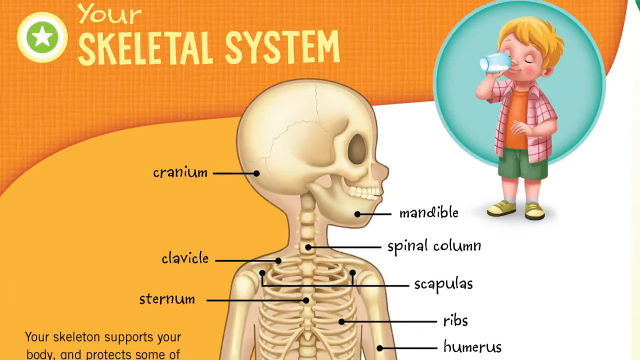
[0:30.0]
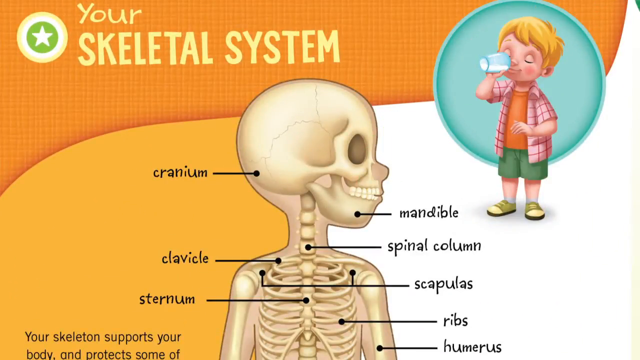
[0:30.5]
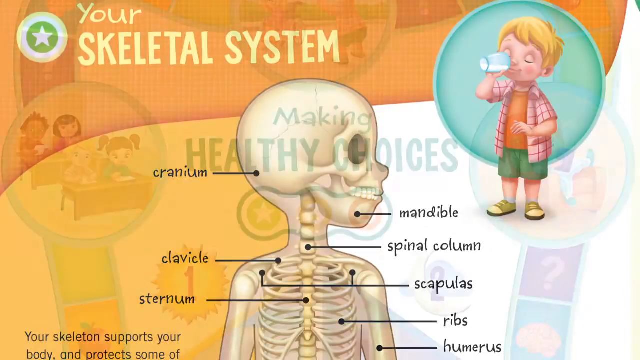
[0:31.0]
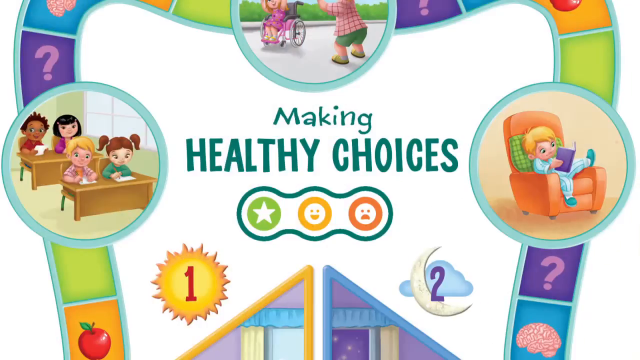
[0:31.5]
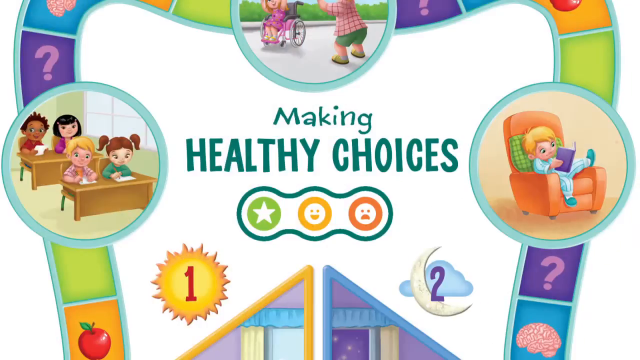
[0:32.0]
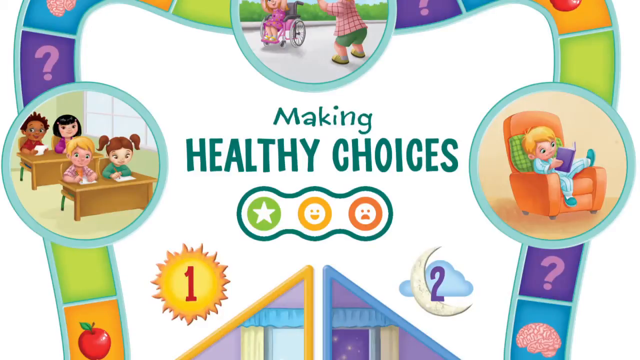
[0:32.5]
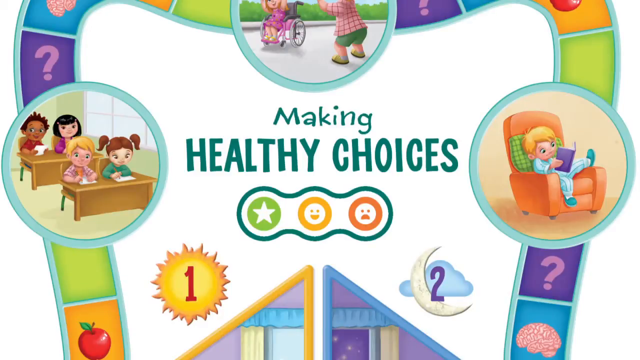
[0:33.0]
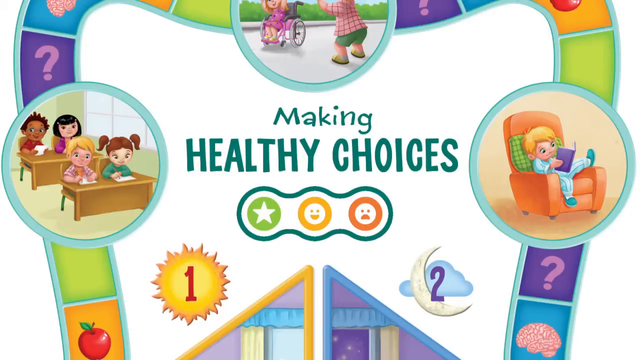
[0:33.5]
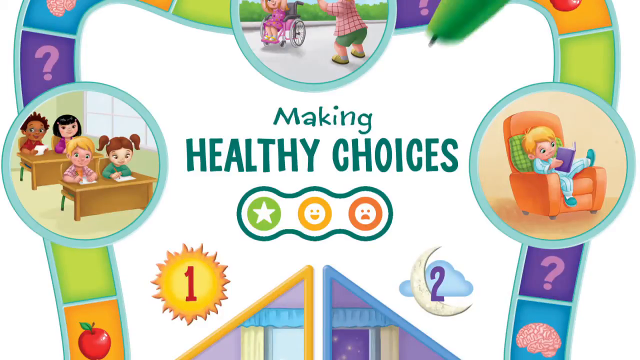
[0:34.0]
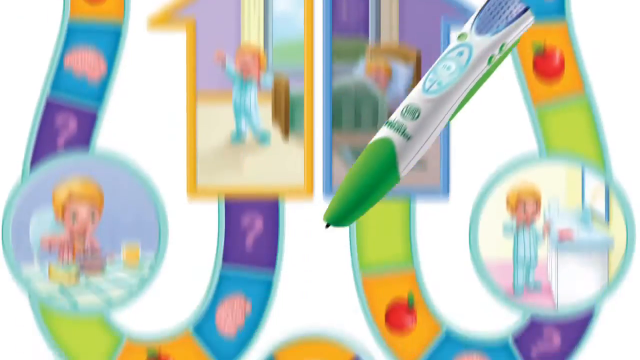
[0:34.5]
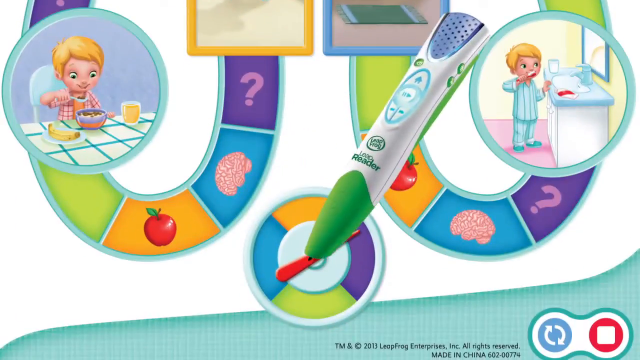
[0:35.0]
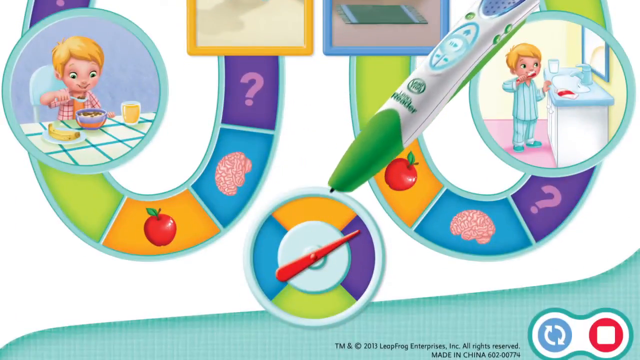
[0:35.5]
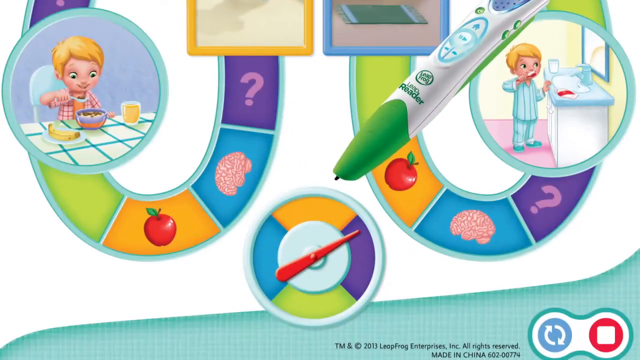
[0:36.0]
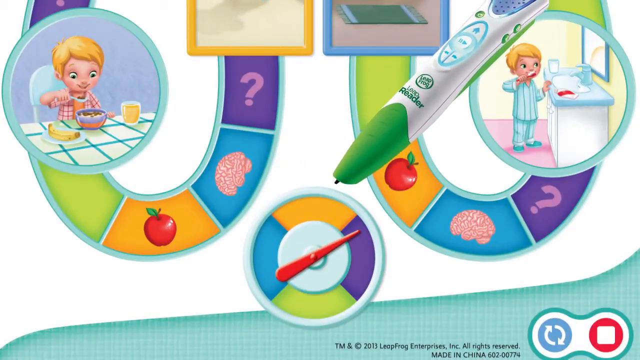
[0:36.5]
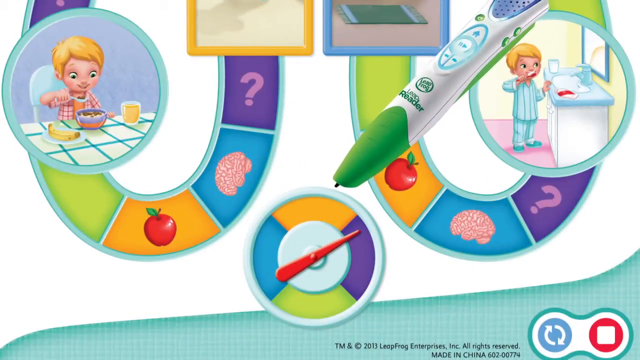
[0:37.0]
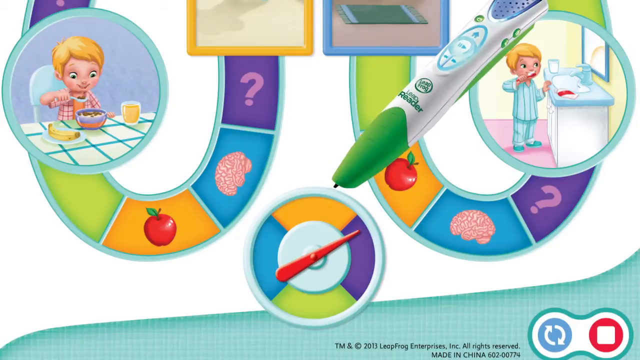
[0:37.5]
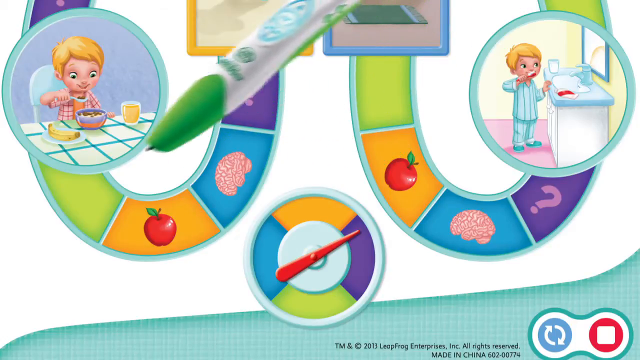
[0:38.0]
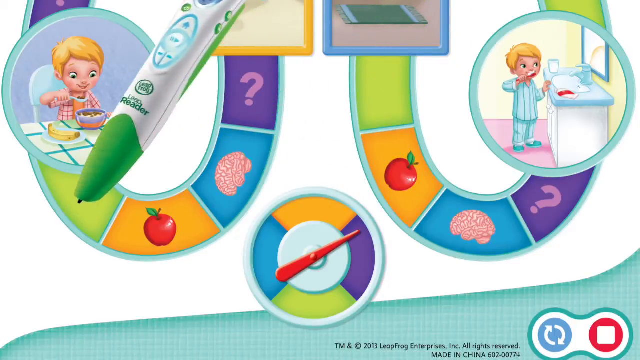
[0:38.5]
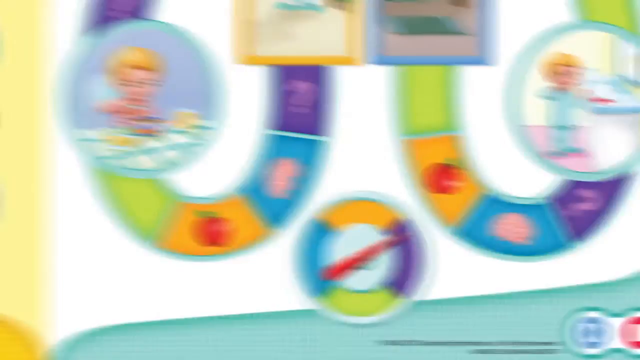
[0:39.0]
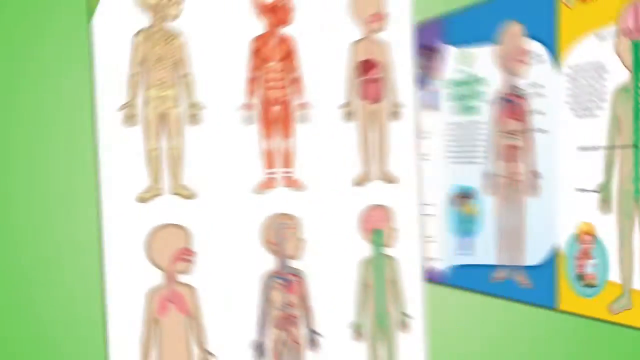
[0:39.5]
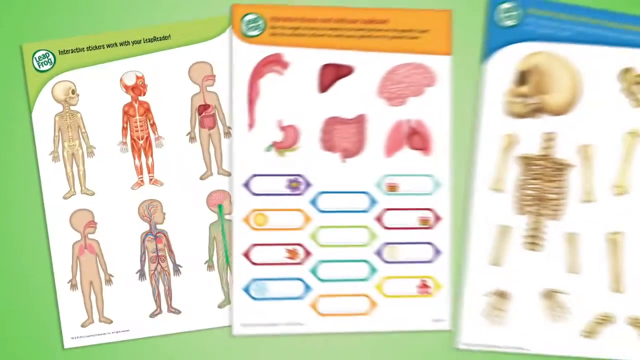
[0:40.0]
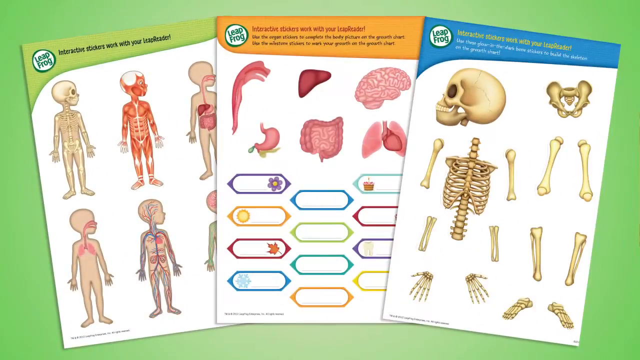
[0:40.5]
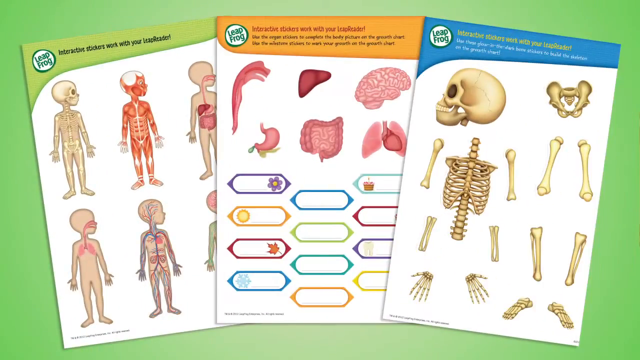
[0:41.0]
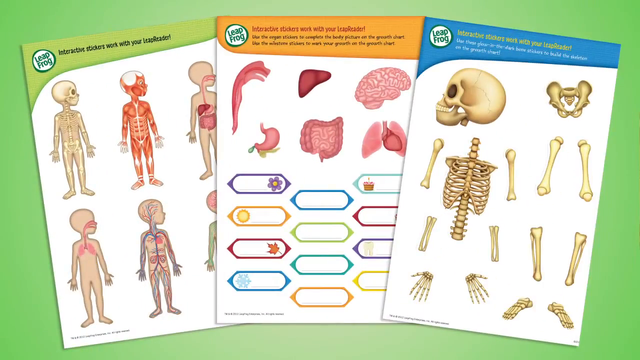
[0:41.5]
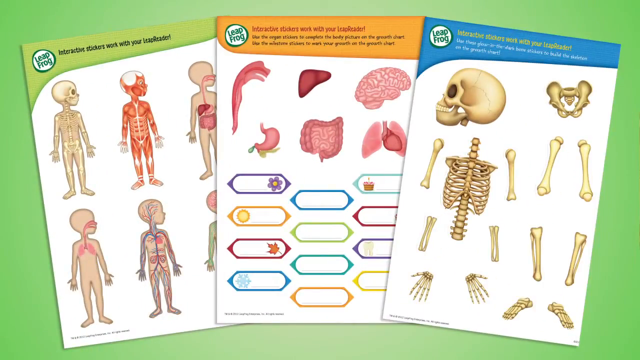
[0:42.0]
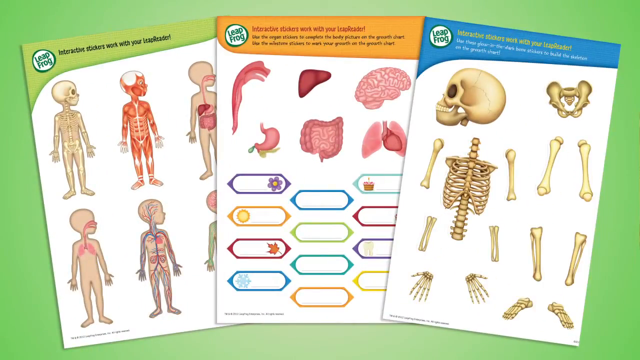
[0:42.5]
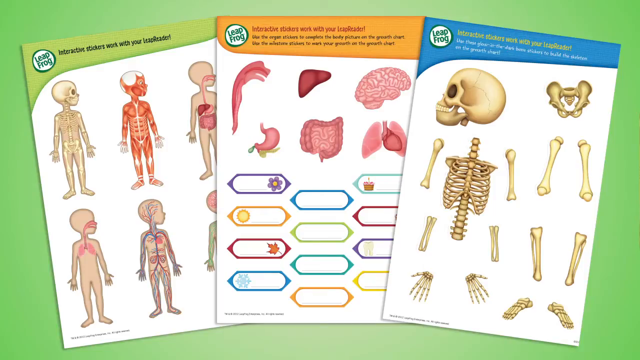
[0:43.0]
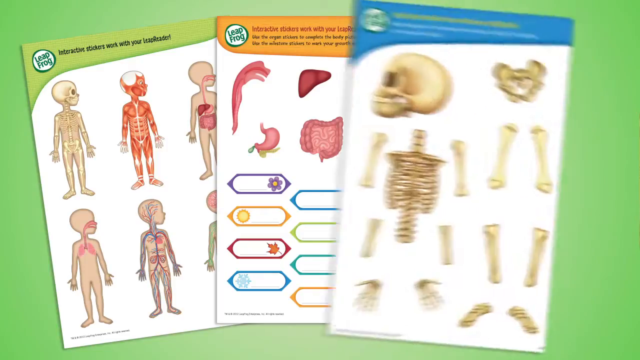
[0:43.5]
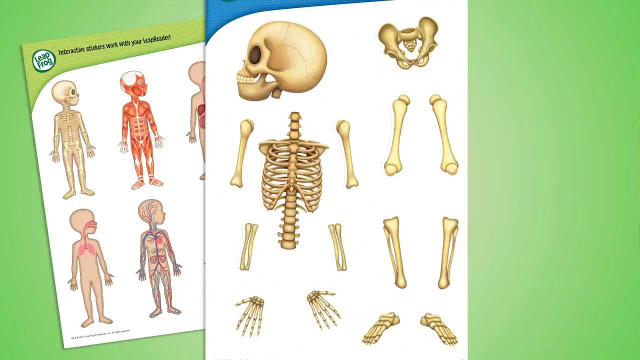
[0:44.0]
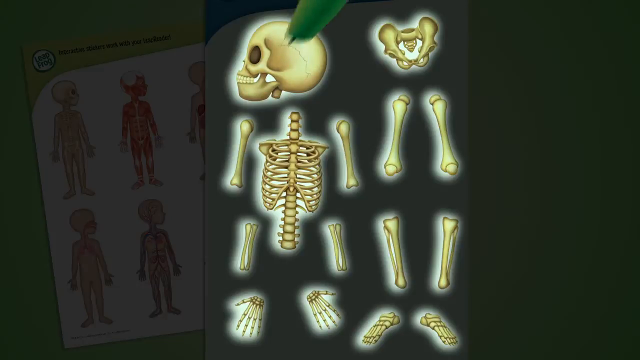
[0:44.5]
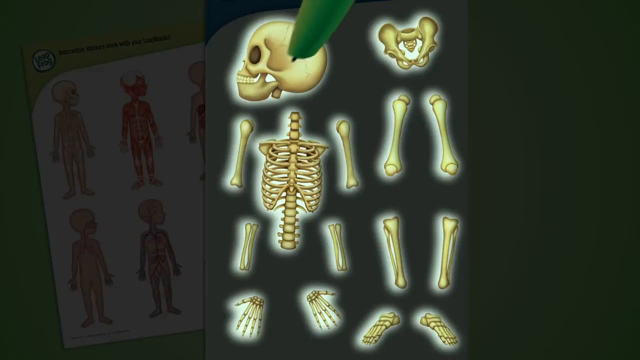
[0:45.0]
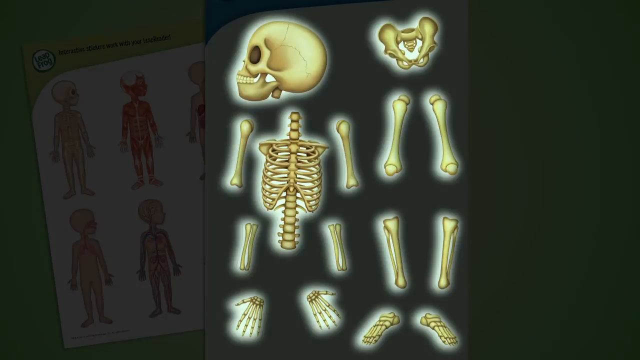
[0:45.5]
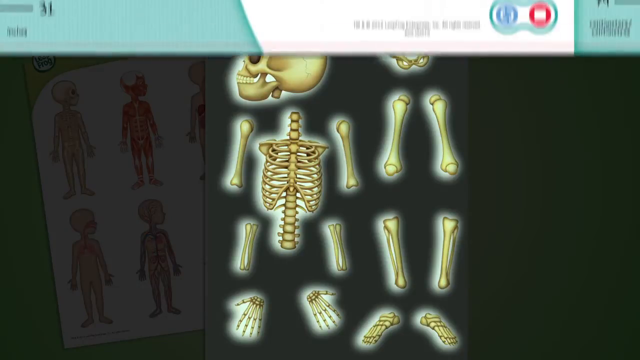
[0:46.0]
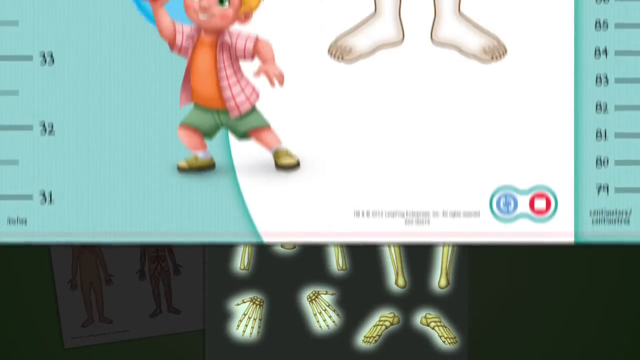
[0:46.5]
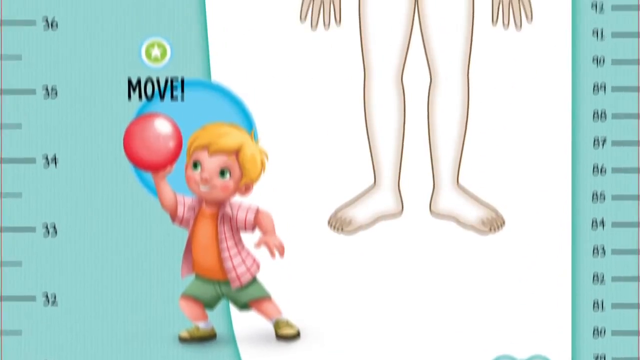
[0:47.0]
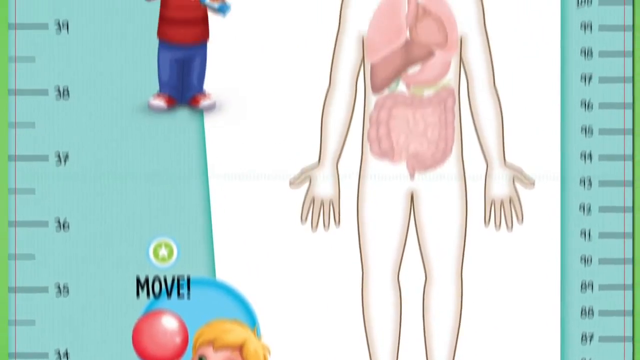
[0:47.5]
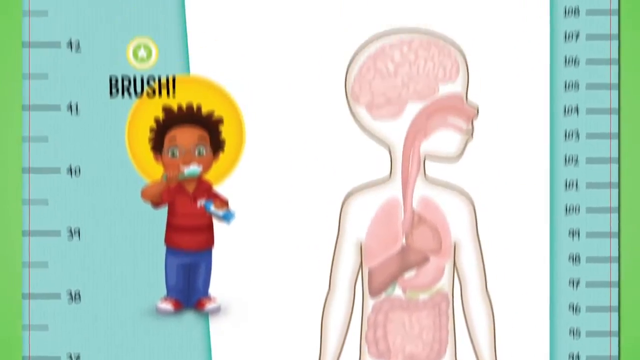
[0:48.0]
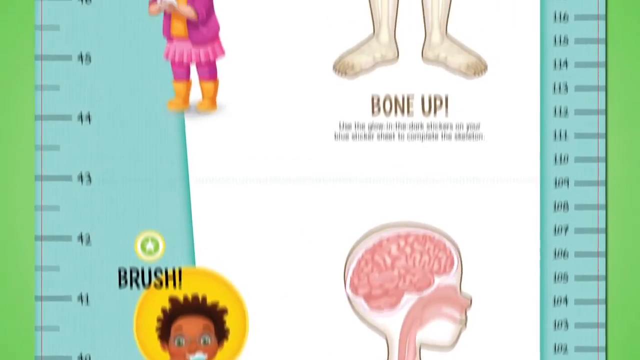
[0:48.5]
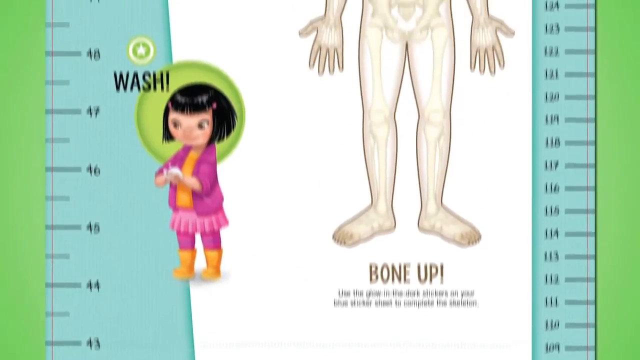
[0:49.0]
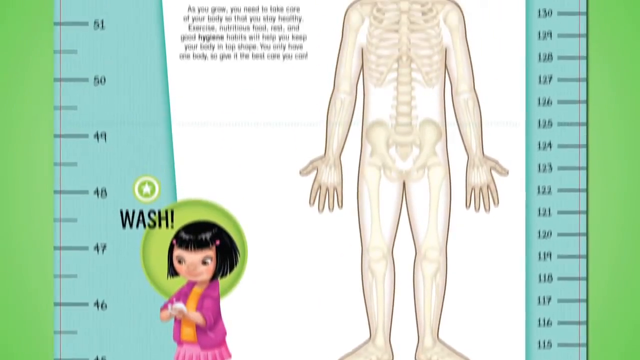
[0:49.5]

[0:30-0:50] A page has a yellow background. In the left corner "skeletal system" is written, with a star in a green circle. In the top right corner a boy is drinking something that looks like coke from a glass, with a light-colored circle behind him. He wears an orange t-shirt, an unbuttoned jacket shirt, green shorts and green shoes. On the bottom right is a big white round. In the center is a skeleton of a human being with pointers to different parts: on the left, the cranium and clavicle; on the right, the mandible, spine, pelvis and rib. The video then shows another page about making healthy choices. On the left, children are sitting in a classroom. At the top are two kids, one sitting in a wheelchair and the other standing. On the right, a boy is reading a book while sitting on a couch.